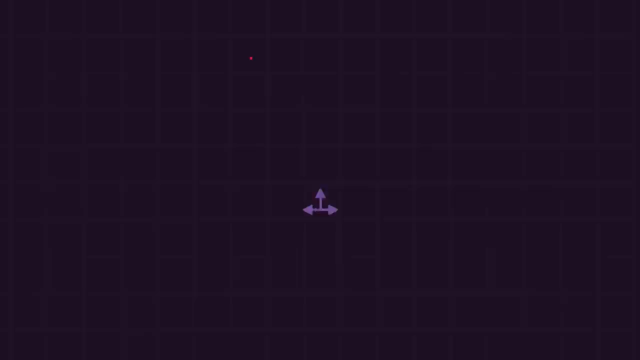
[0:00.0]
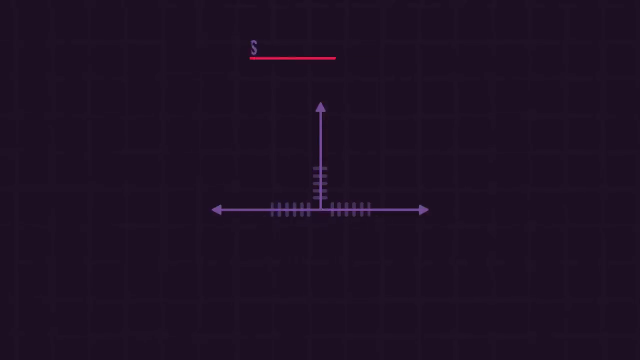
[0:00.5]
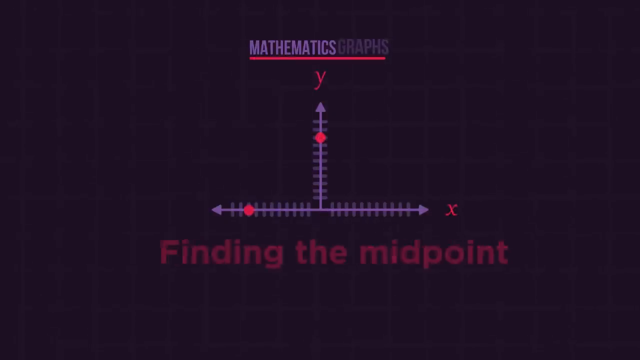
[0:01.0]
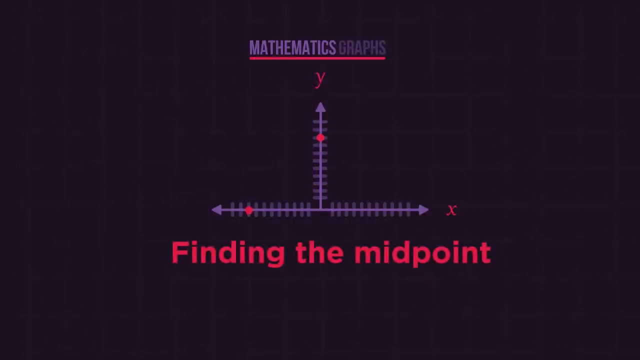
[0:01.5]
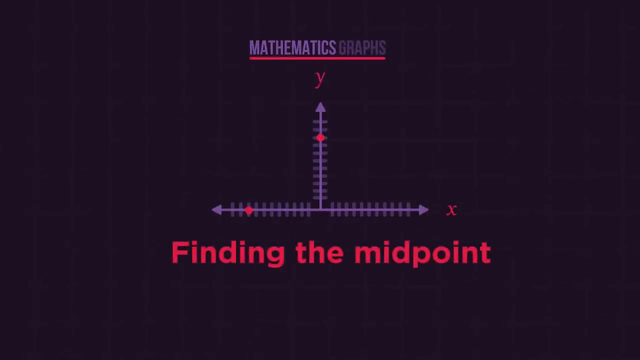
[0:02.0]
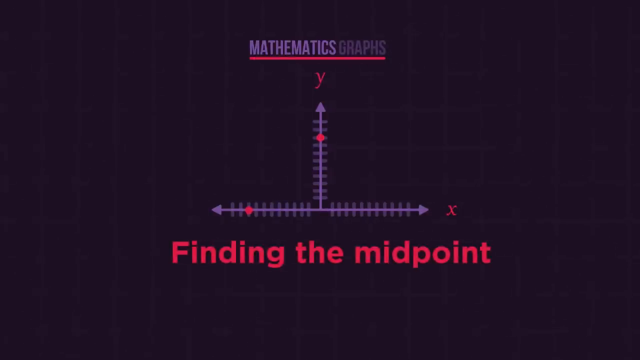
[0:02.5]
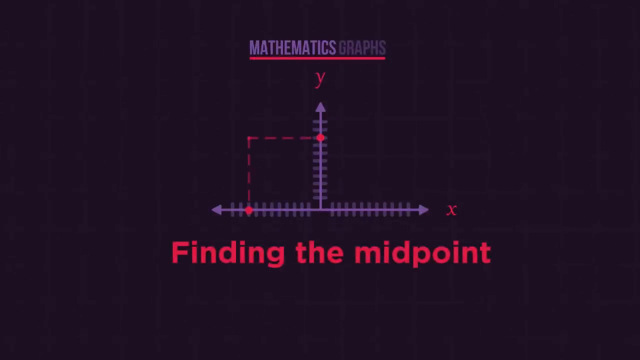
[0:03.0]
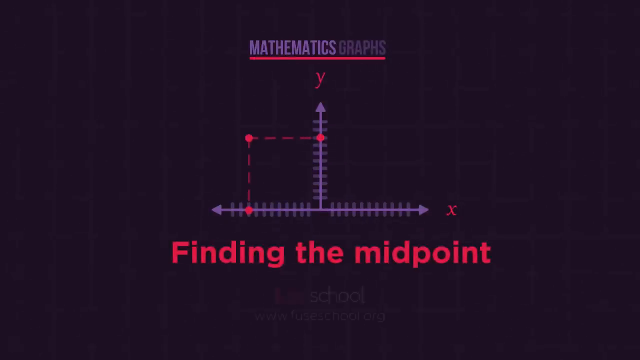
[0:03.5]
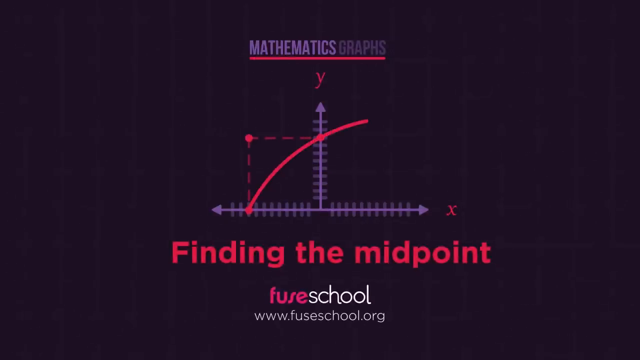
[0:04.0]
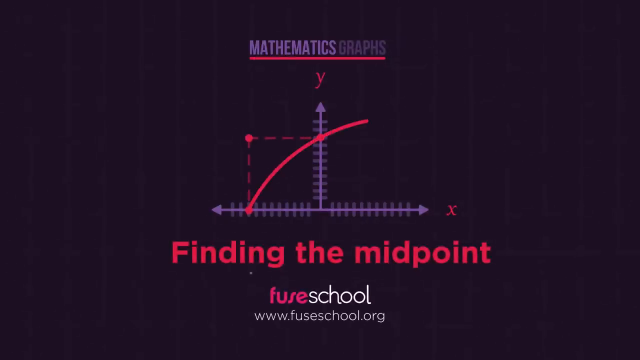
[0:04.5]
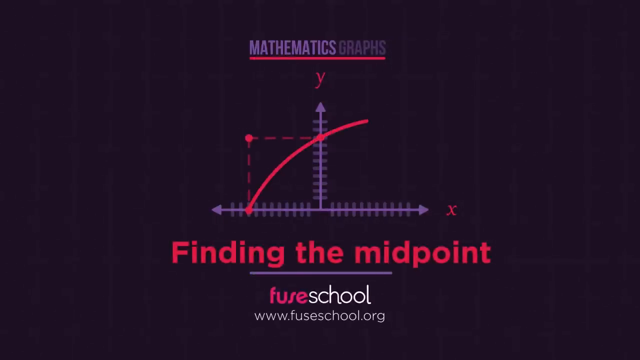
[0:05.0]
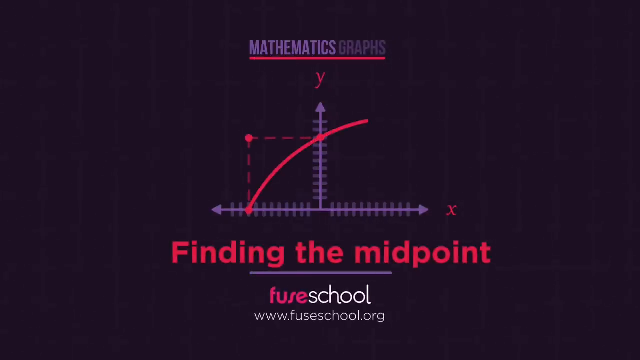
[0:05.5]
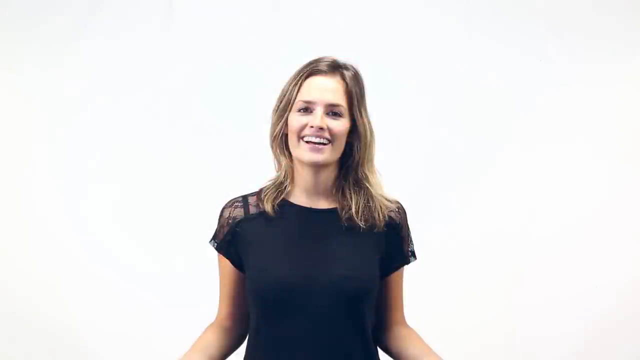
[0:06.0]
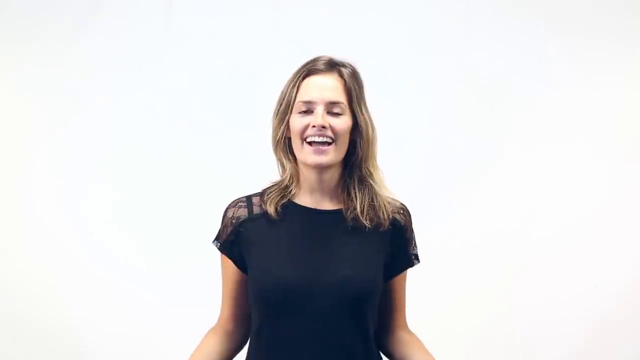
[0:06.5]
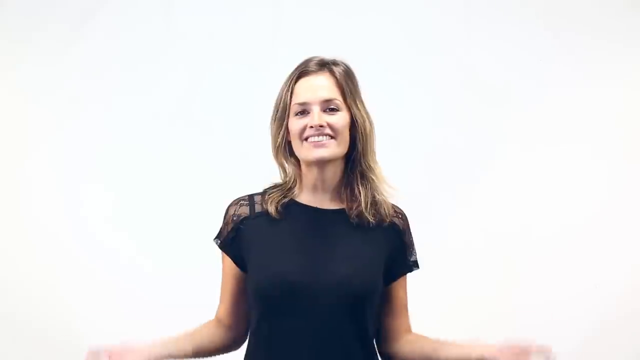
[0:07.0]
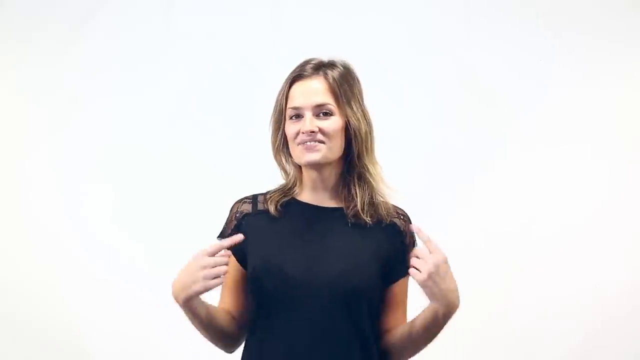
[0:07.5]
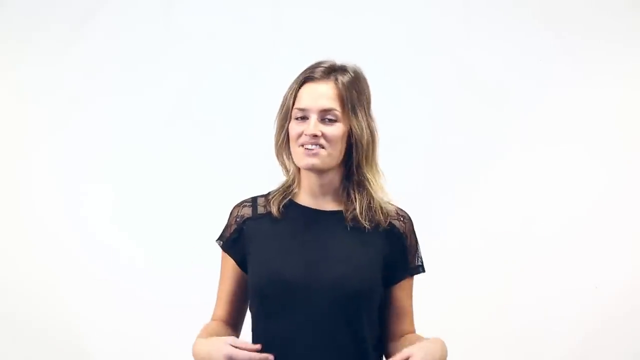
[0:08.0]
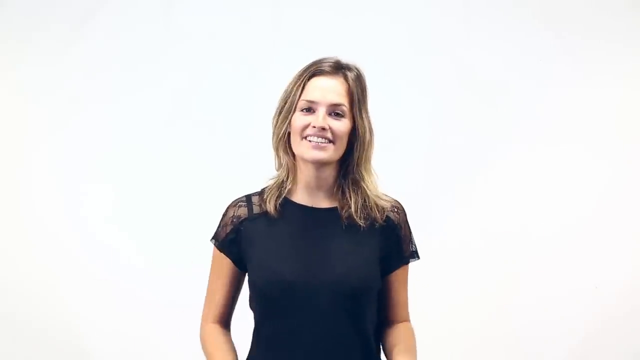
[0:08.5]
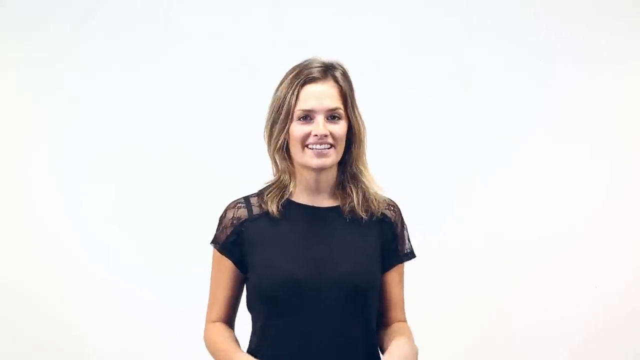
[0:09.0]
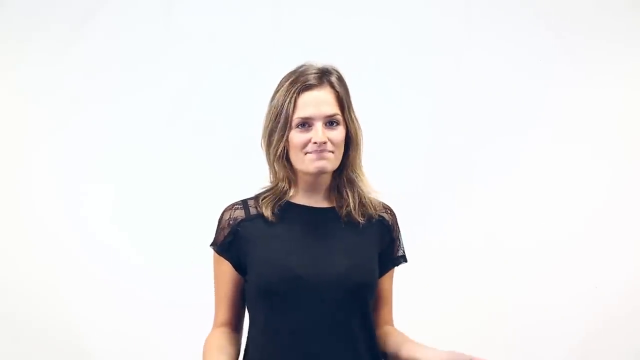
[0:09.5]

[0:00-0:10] The video opens on a black background with a grid behind it. Three arrows appear joined together, one pointing up and the other two pointing left and right, and they grow outward to form something like a graph. At the top, in all capital letters, are the words "MATHEMATICS GRAPHICS", and below that "finding the midpoint". The arrows extend to form the graph, with a Y on the vertical arrow and an X on the horizontal arrow. Other parts of the graph are drawn, and the video is shown to be from FuseSchool.org. Then a woman in a black t-shirt appears and begins to talk.